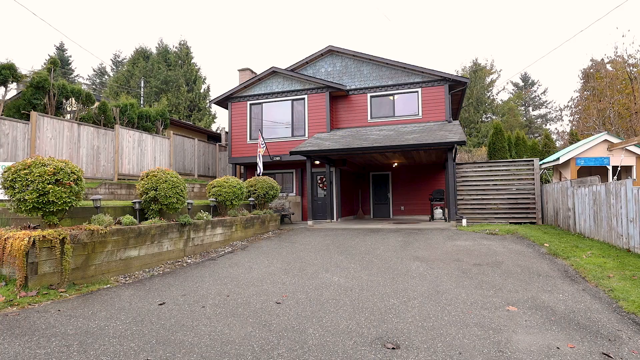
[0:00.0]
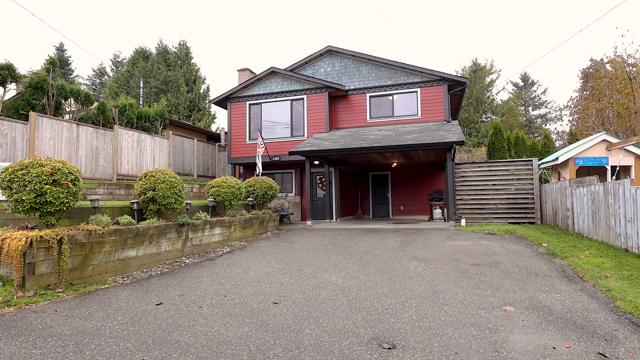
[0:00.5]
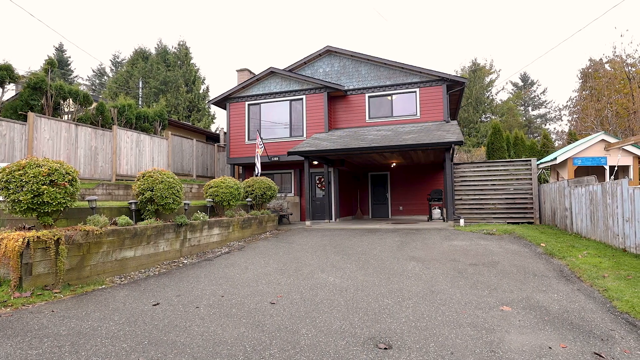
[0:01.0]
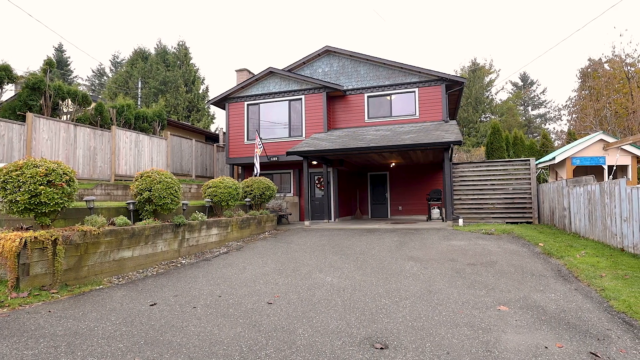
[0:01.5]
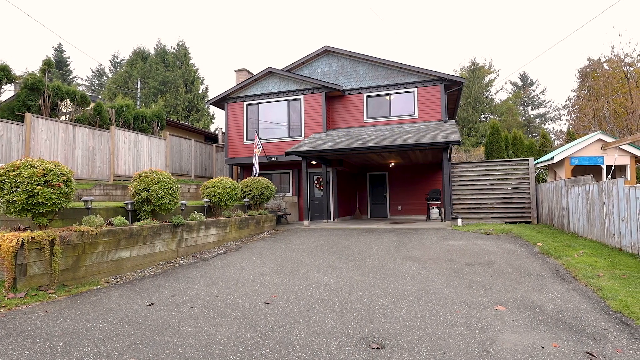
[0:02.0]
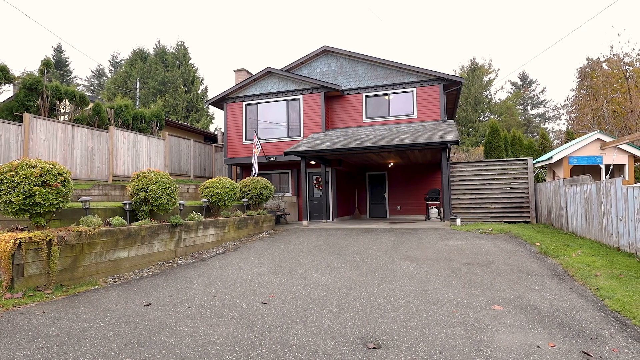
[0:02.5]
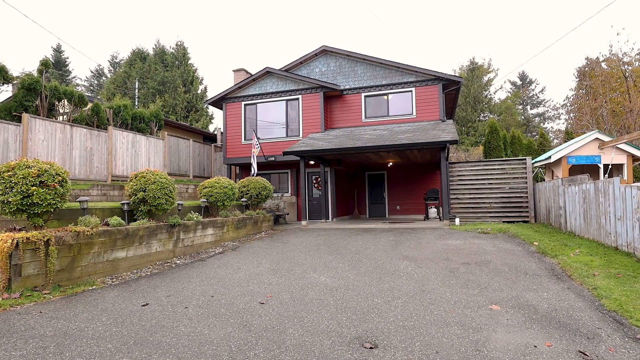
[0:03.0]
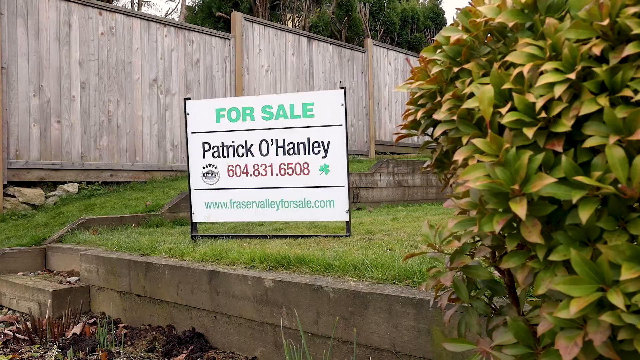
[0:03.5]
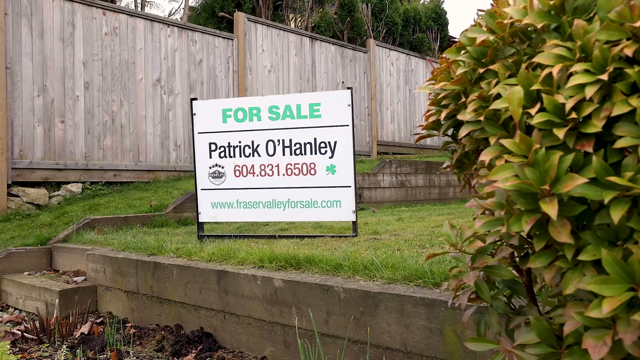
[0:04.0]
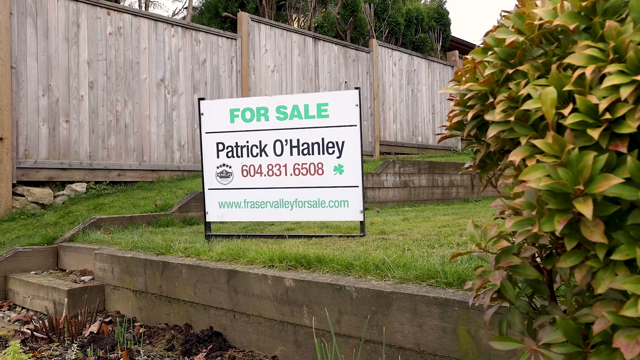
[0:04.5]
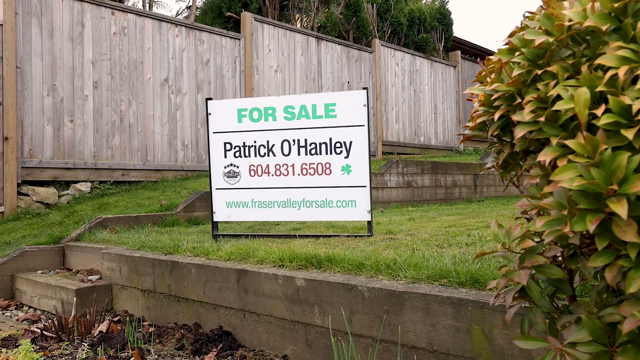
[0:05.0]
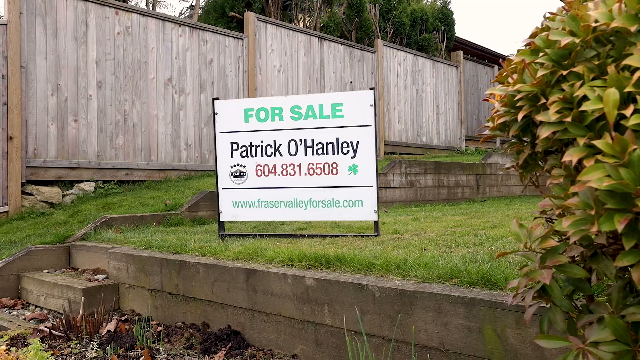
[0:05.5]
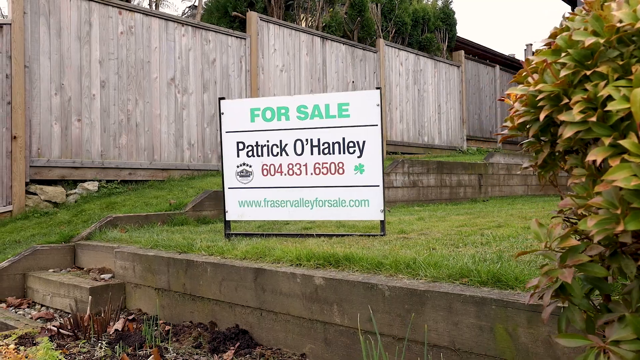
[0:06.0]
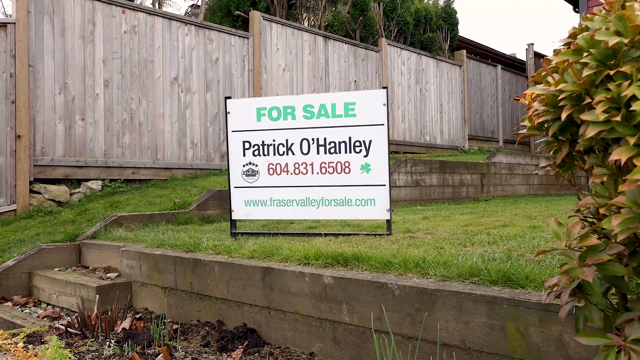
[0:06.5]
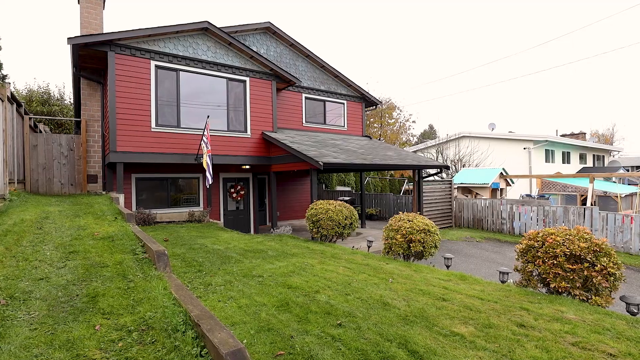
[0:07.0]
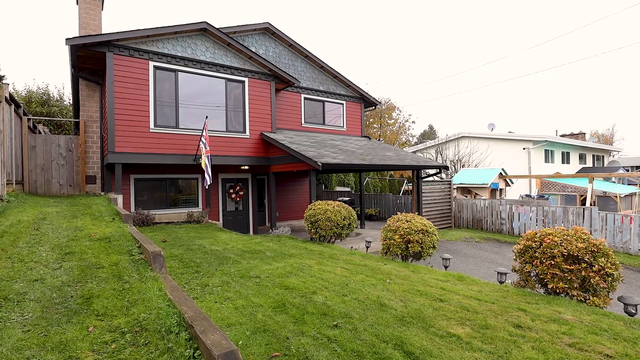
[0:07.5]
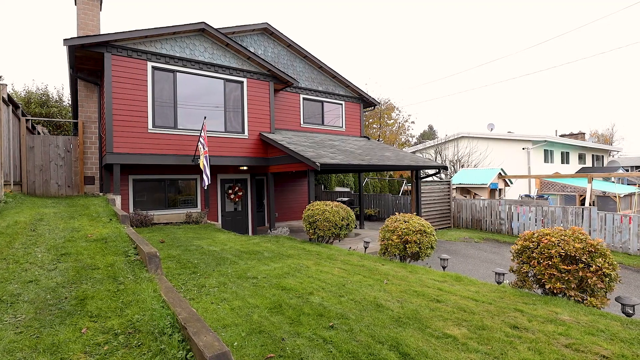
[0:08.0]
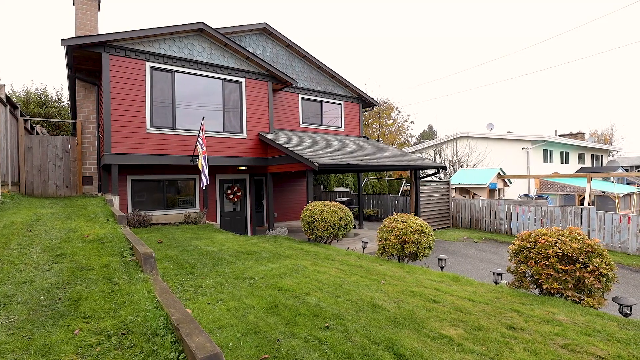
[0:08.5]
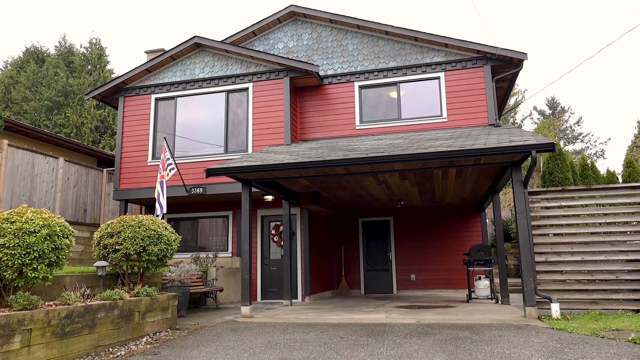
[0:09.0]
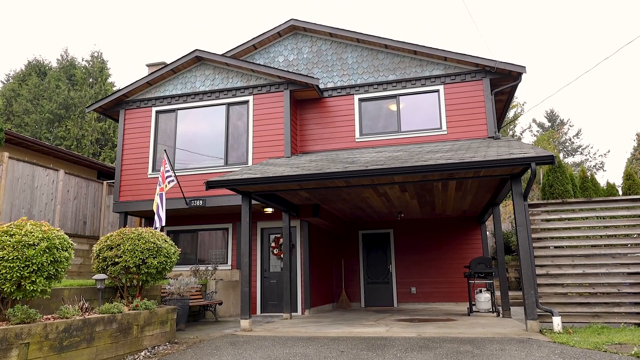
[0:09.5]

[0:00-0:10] The exterior of a home is shown, and the camera focuses in on a realty sign in the front lawn, suggesting the home may be for sale. In front of the house is a large driveway, and the house is two stories, red with a gray roof. There is kind of an older wooden fence on either side of it, along with some shrubbery. A flag hangs from the front of the house. The real estate sign is white and says "for sale" in teal, all-caps lettering; underneath that it shows the name Patrick O'Hanley with a telephone number, and below that, in teal, a website.